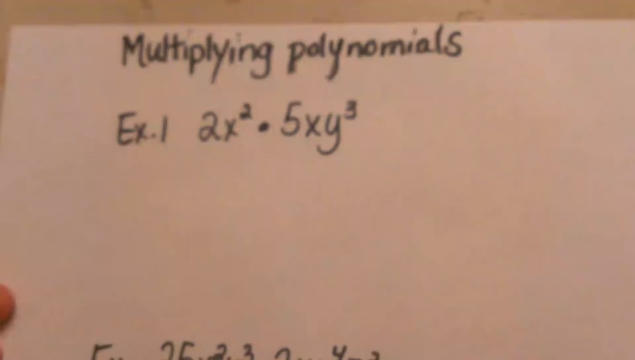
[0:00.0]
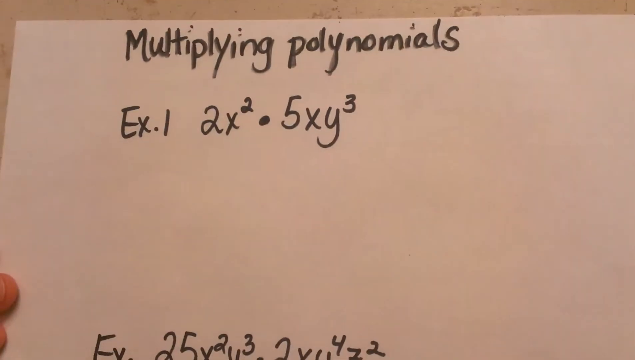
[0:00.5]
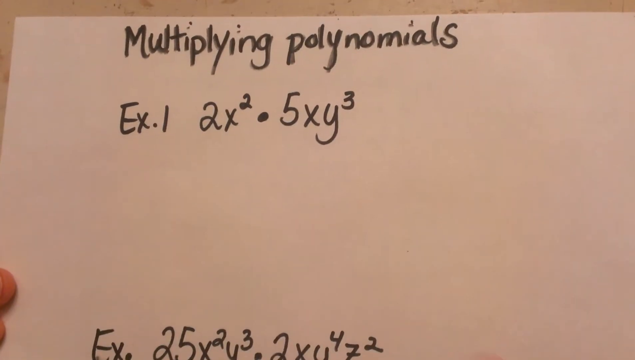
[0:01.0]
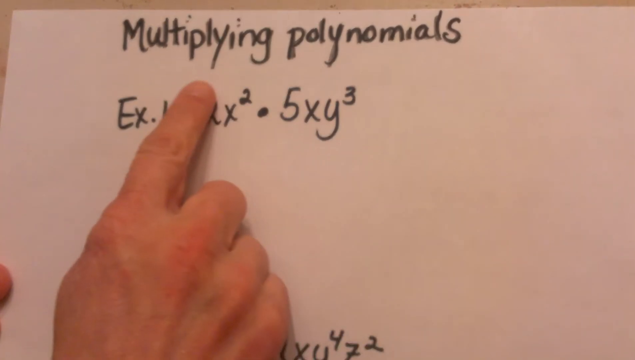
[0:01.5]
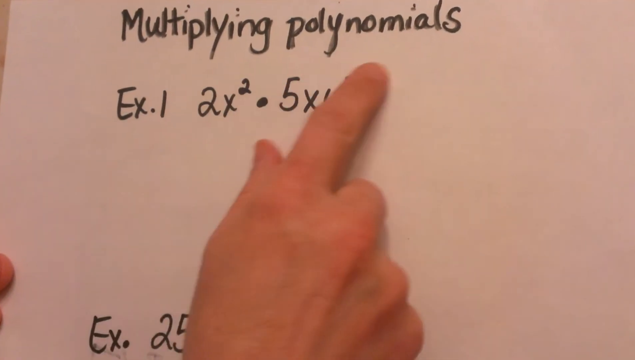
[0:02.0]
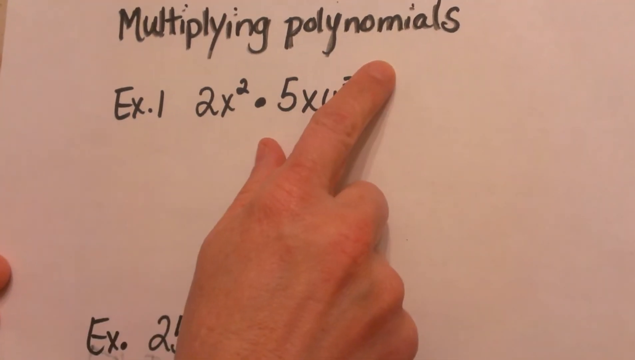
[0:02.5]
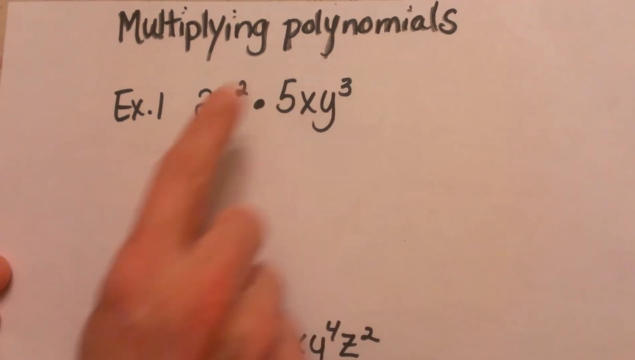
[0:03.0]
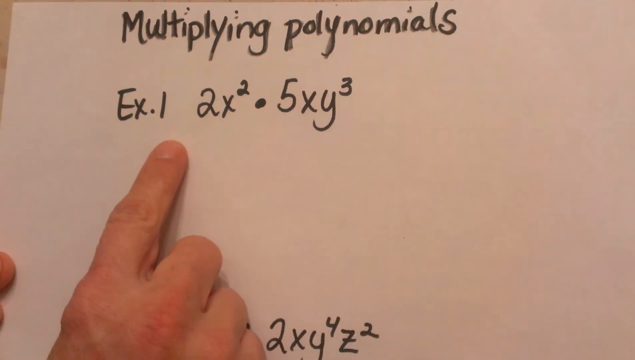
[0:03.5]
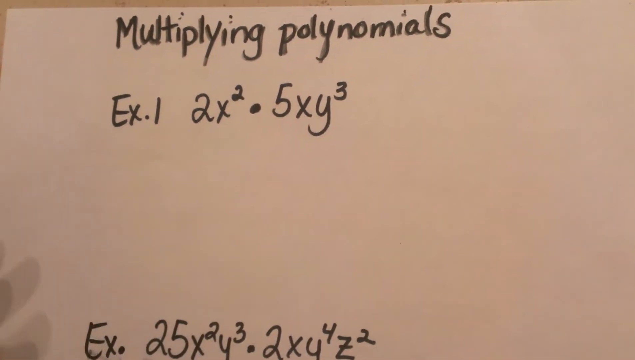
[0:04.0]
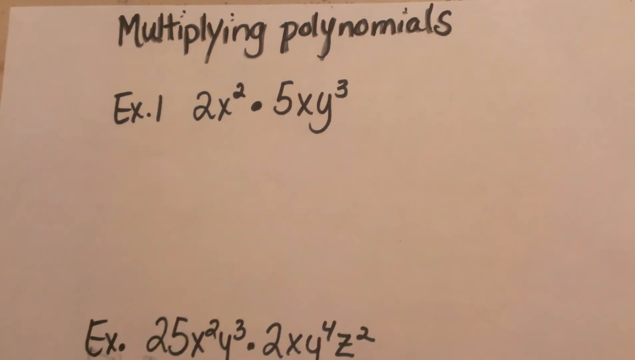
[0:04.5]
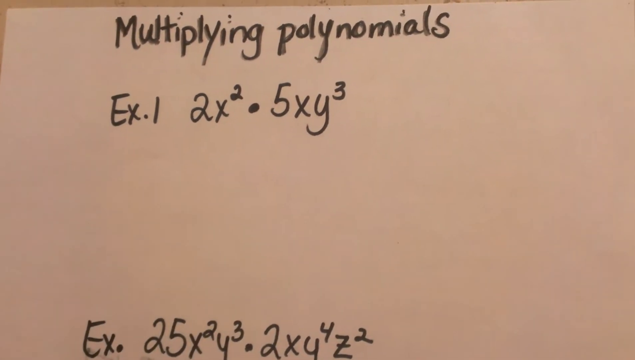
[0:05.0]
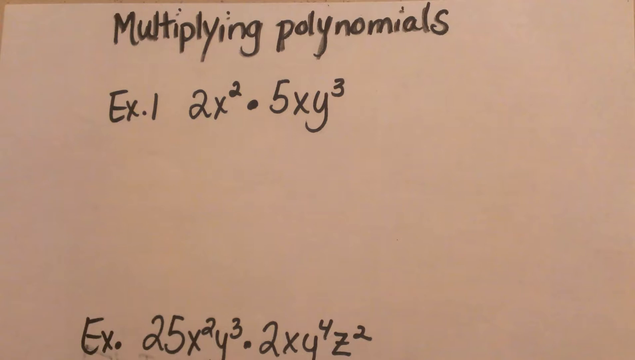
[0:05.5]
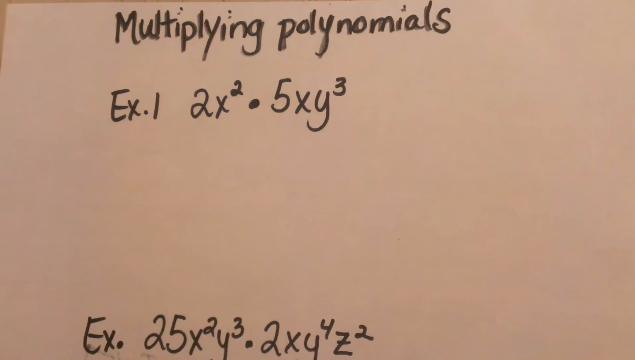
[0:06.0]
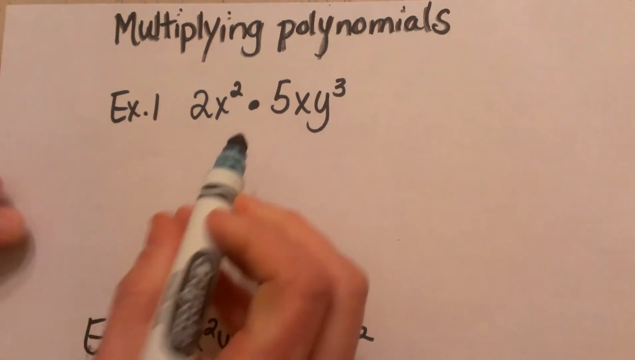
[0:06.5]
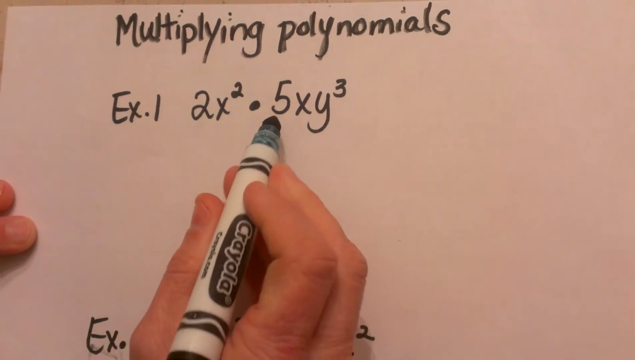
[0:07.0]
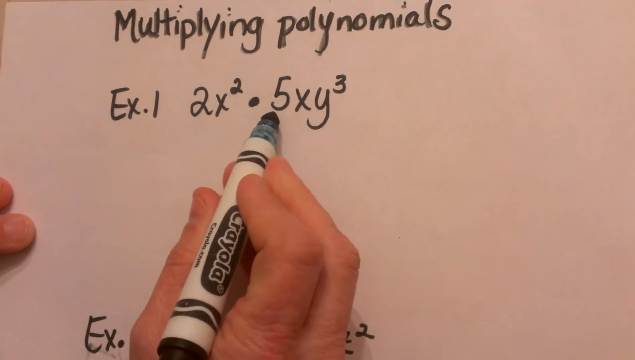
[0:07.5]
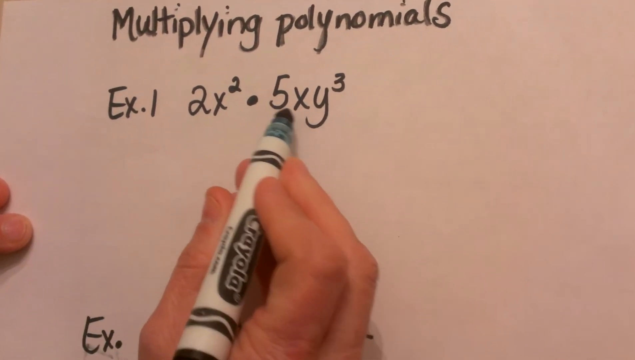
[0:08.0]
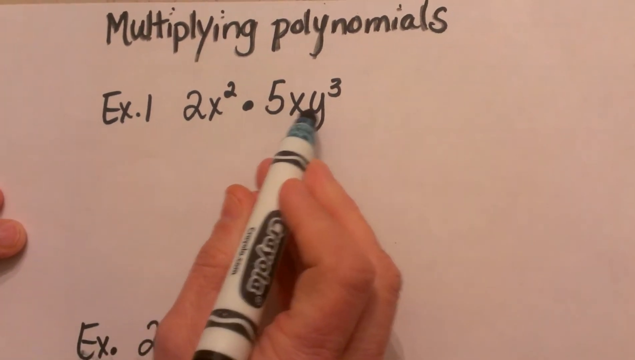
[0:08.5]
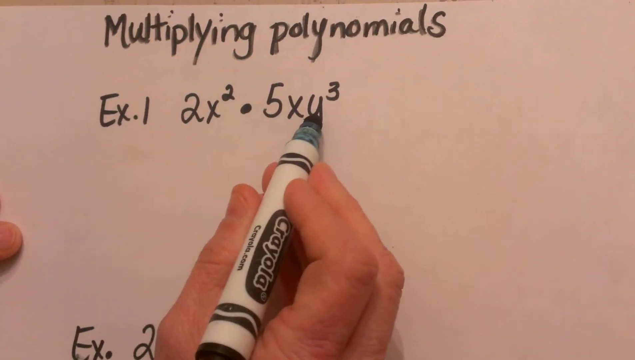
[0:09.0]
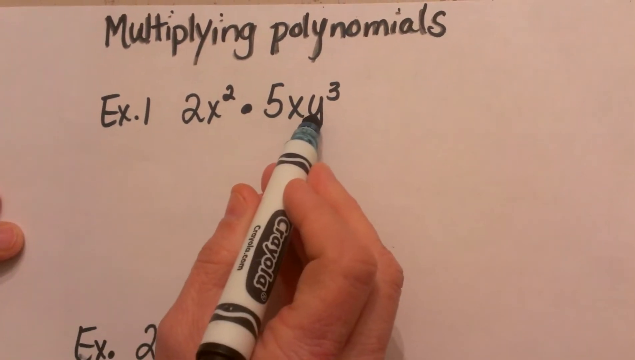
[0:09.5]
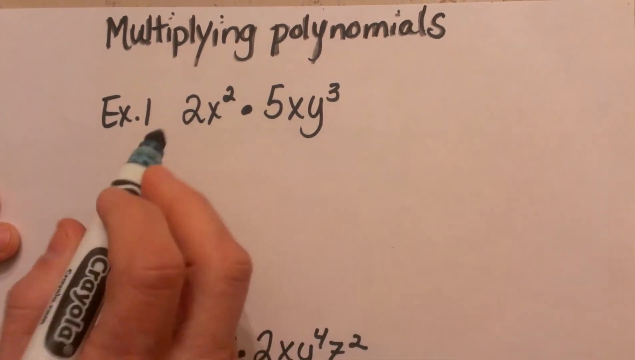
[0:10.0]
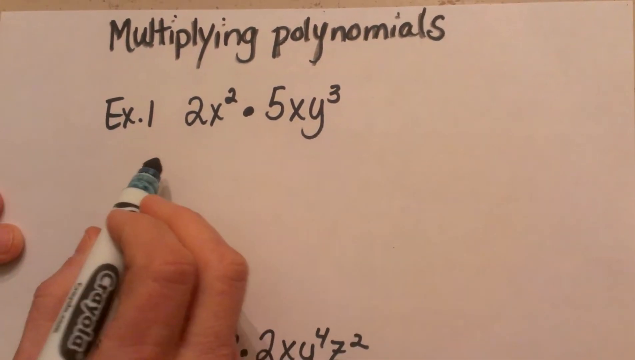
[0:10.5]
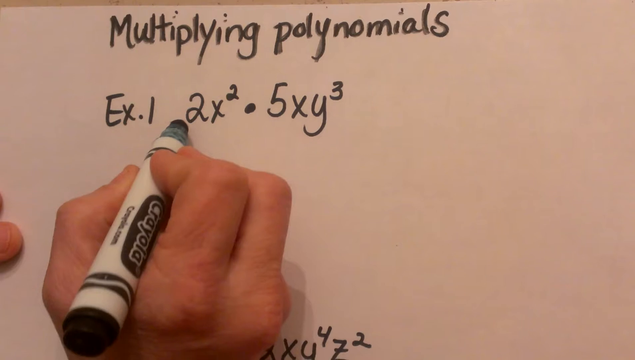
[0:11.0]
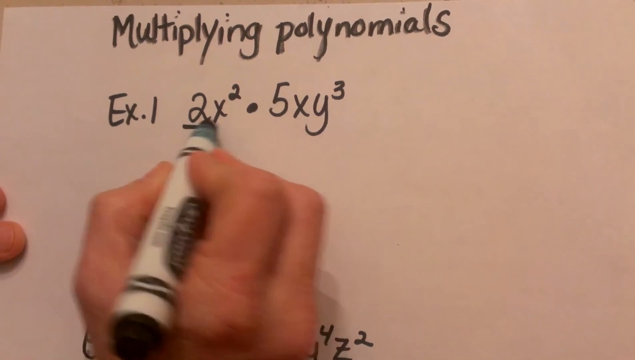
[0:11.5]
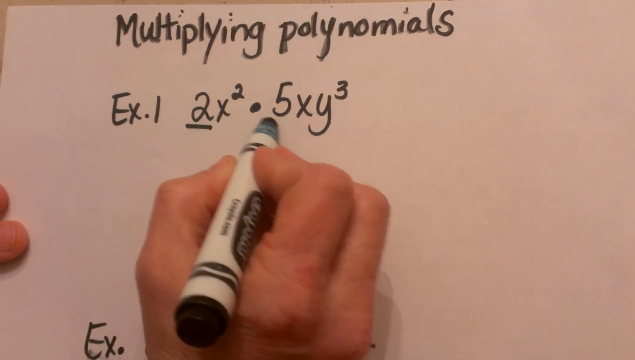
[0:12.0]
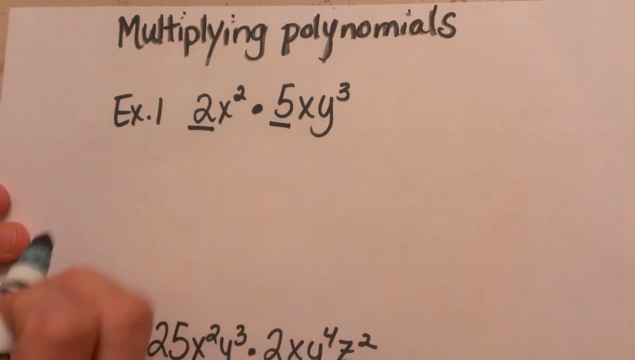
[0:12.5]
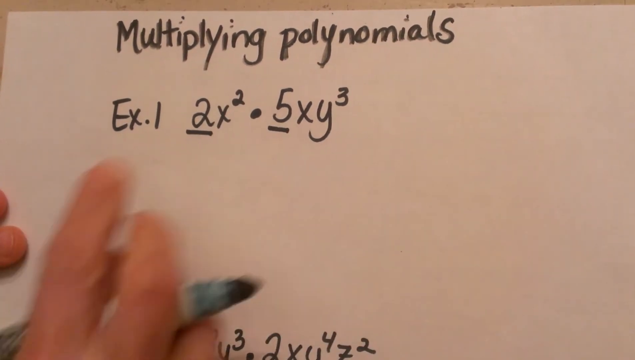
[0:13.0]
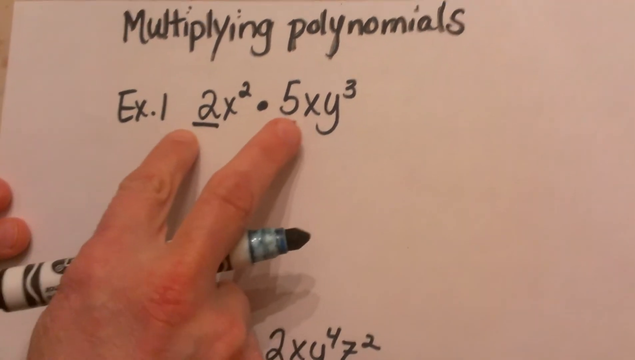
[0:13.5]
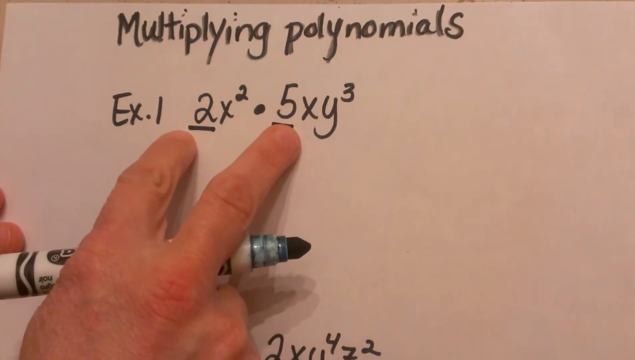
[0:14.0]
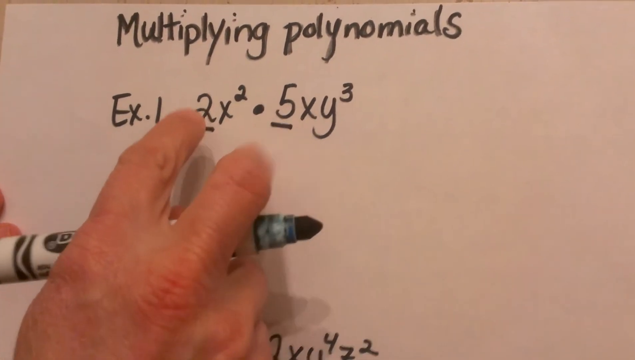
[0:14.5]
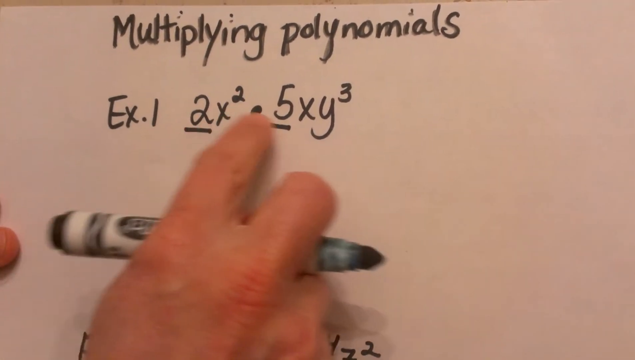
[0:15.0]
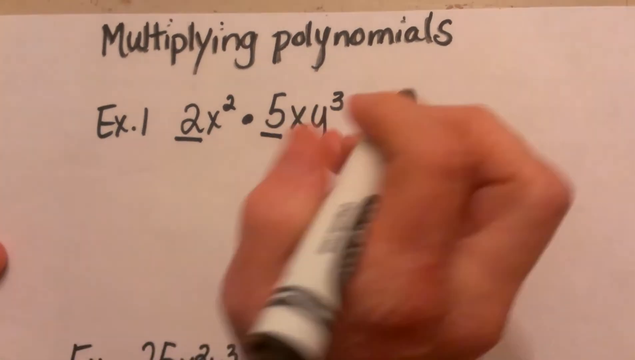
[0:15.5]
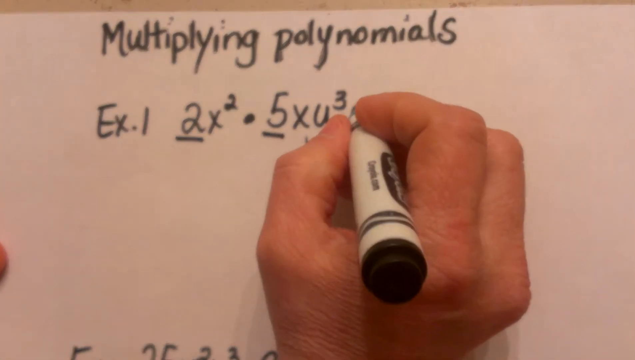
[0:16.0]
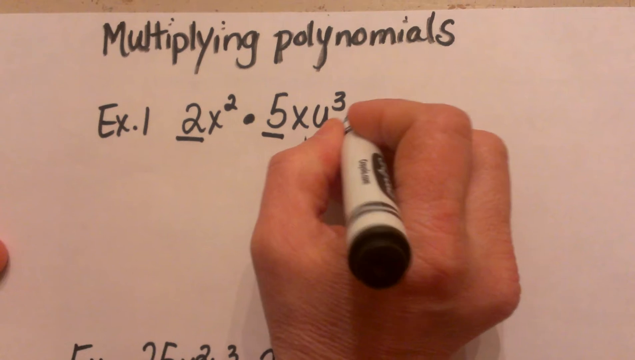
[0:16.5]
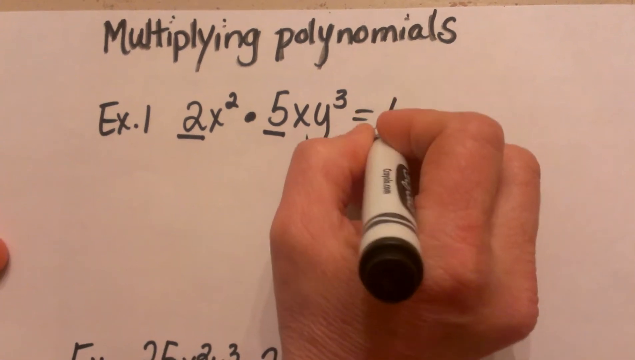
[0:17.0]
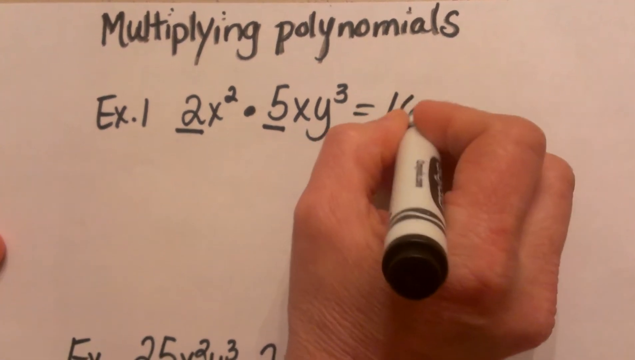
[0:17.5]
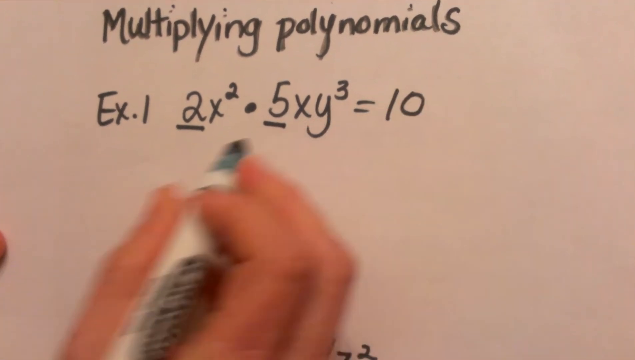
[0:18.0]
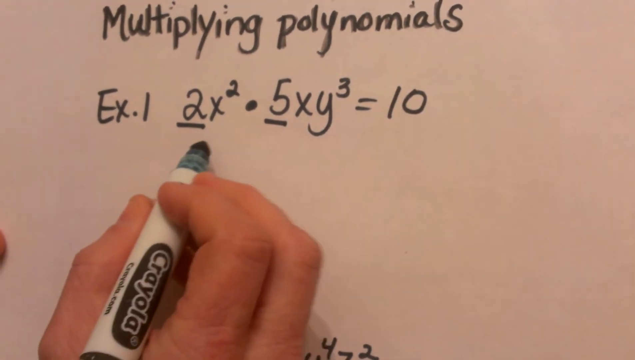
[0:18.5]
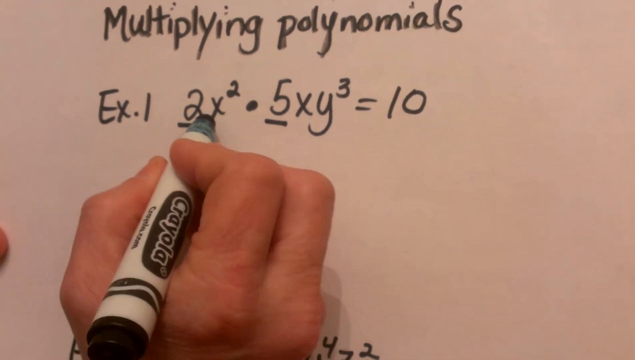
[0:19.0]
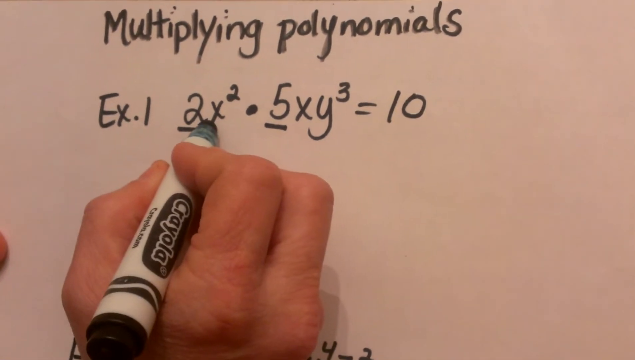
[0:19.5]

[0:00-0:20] A math problem on multiplying polynomials is on the screen, labelled as example one. The expression is 2x squared minus 5xy raised to the power 3. The facilitator moves his fingers around the numbers, then takes a marker and underlines the numbers 2 and 5, and equates those two numbers to 10.